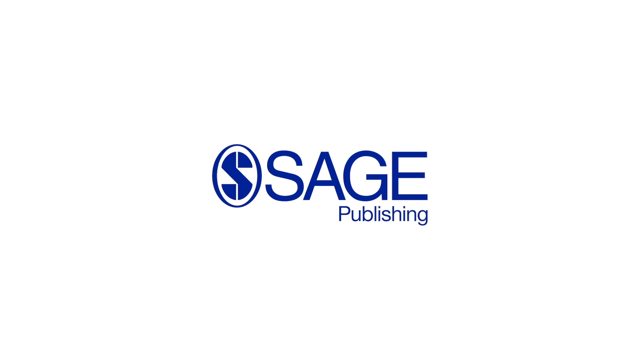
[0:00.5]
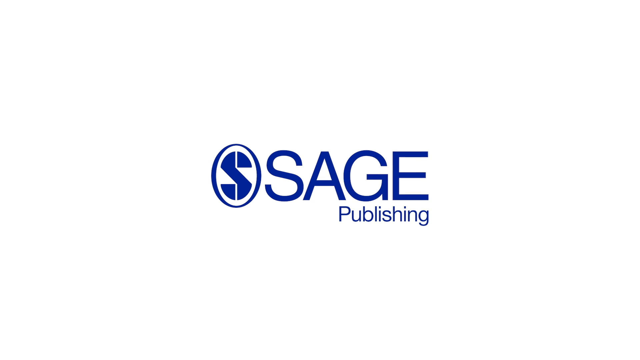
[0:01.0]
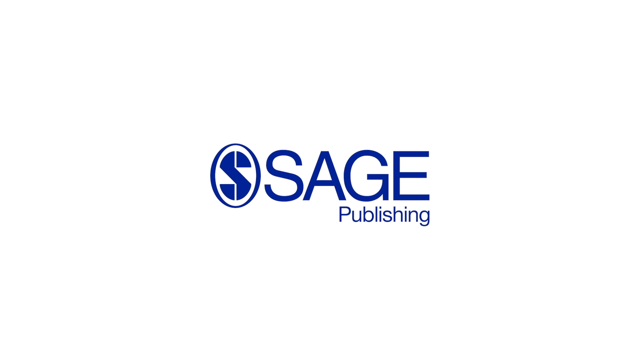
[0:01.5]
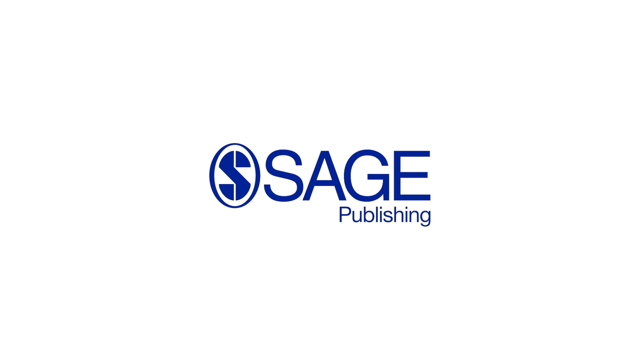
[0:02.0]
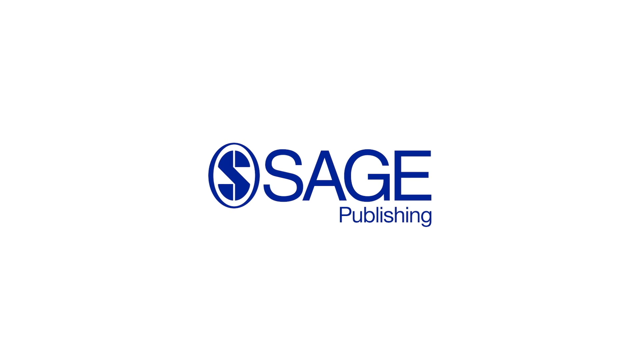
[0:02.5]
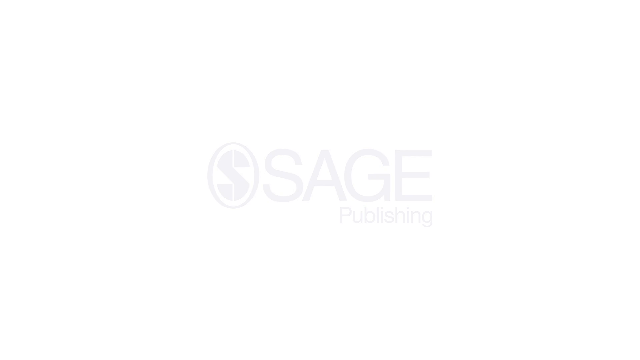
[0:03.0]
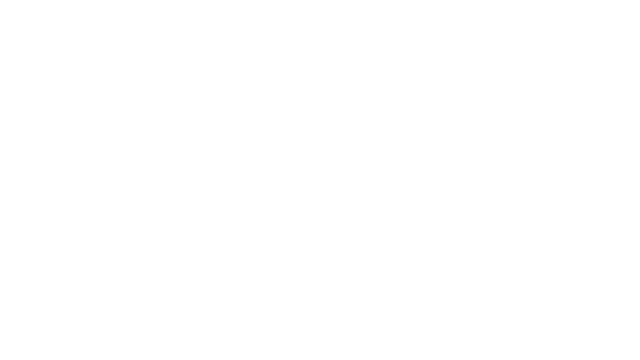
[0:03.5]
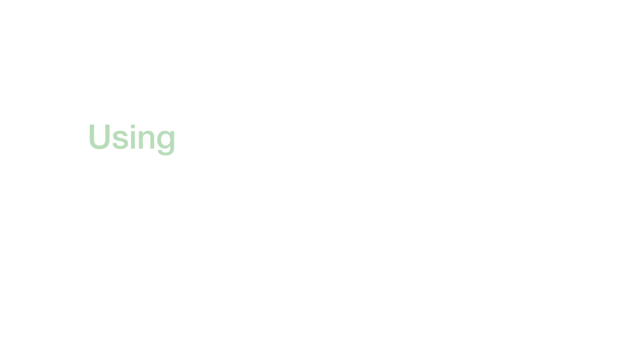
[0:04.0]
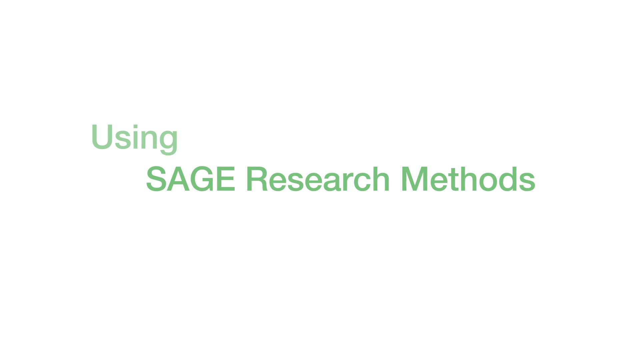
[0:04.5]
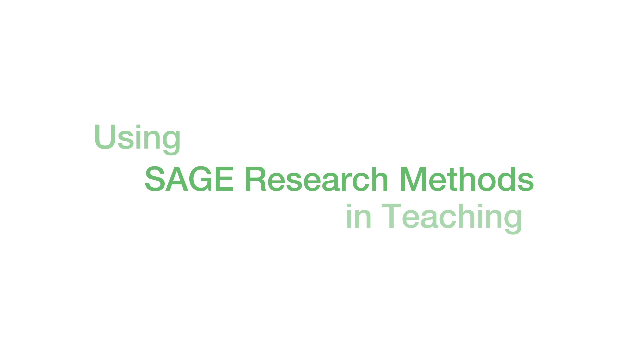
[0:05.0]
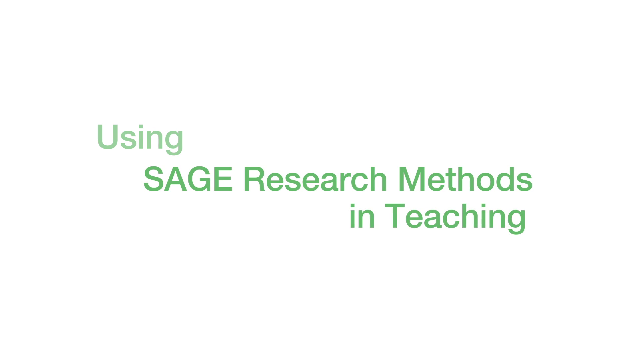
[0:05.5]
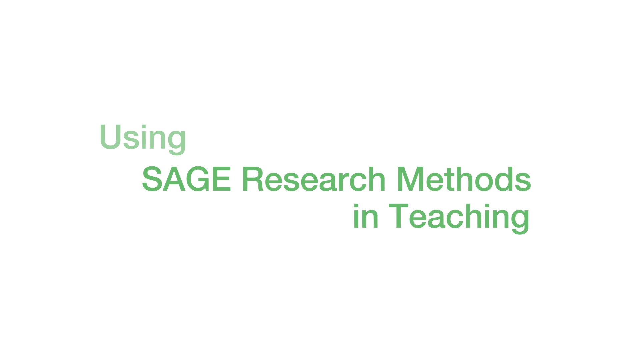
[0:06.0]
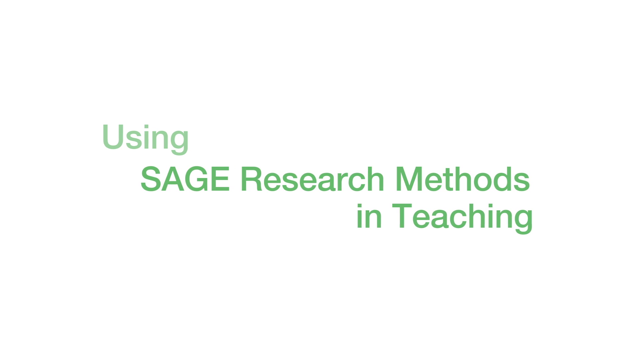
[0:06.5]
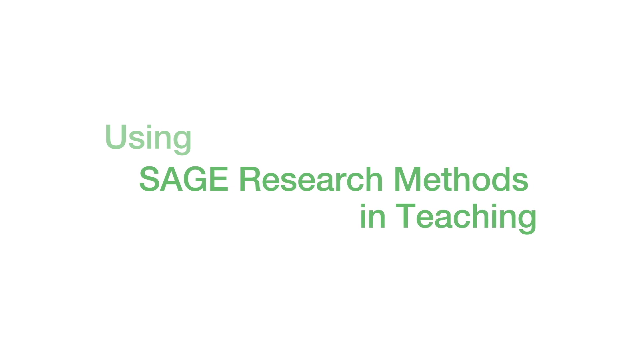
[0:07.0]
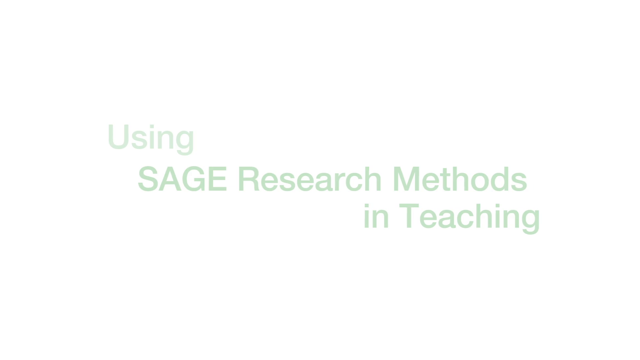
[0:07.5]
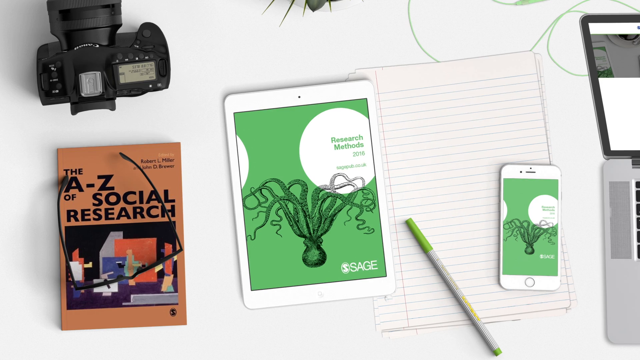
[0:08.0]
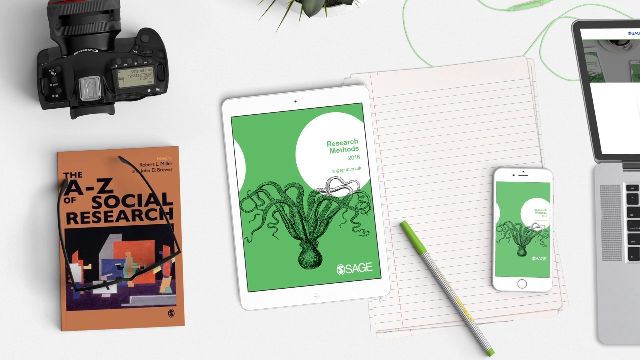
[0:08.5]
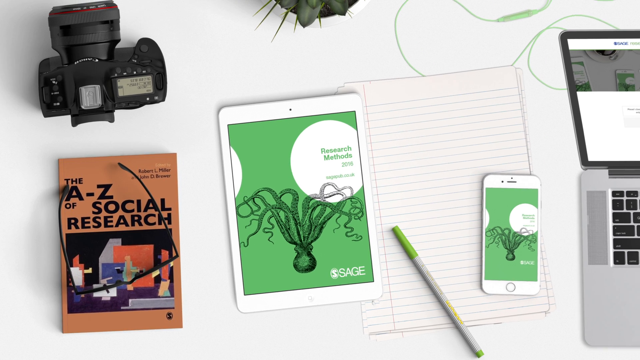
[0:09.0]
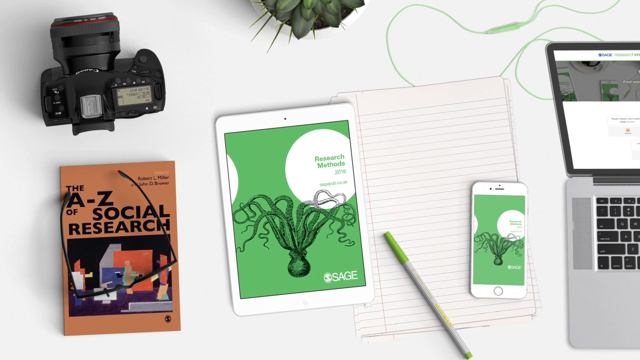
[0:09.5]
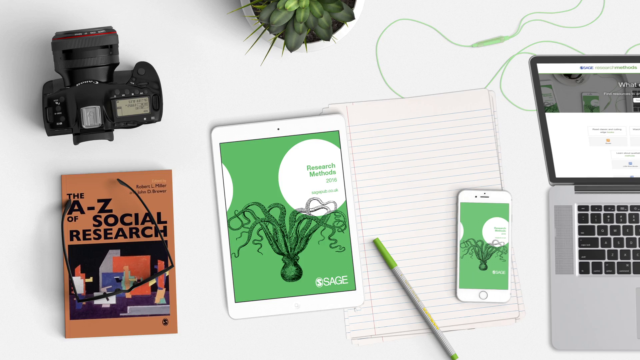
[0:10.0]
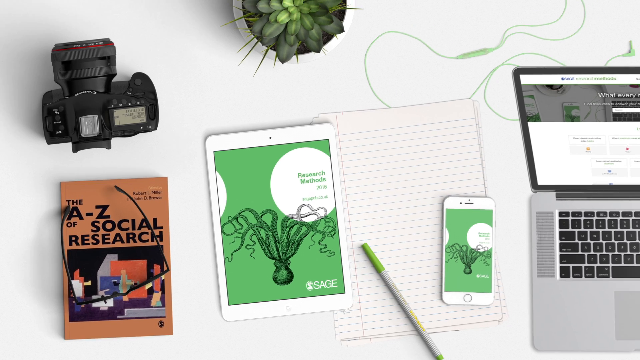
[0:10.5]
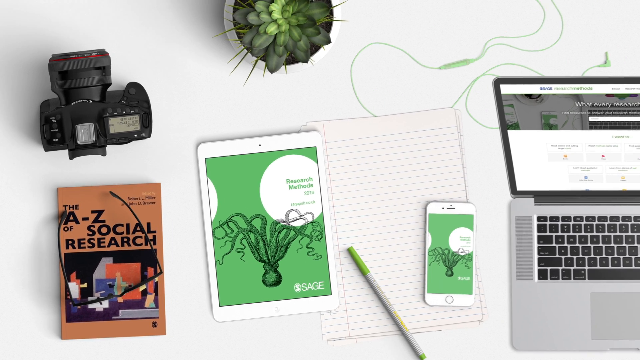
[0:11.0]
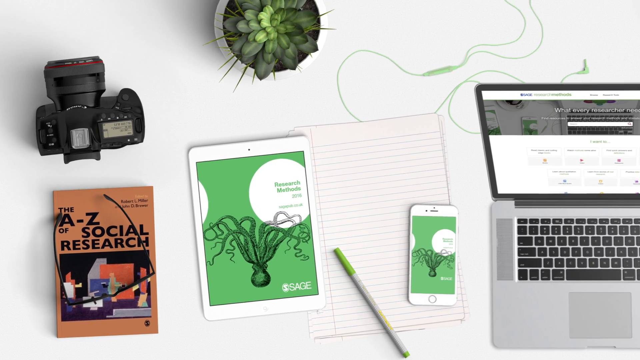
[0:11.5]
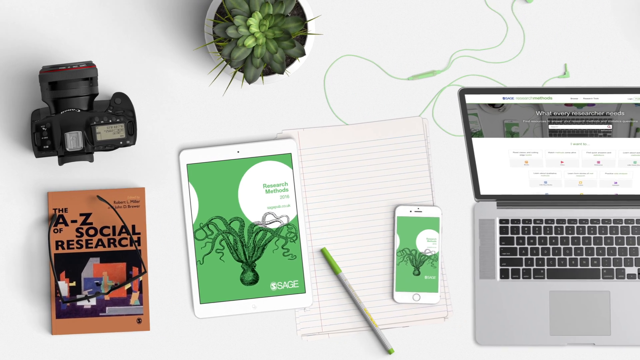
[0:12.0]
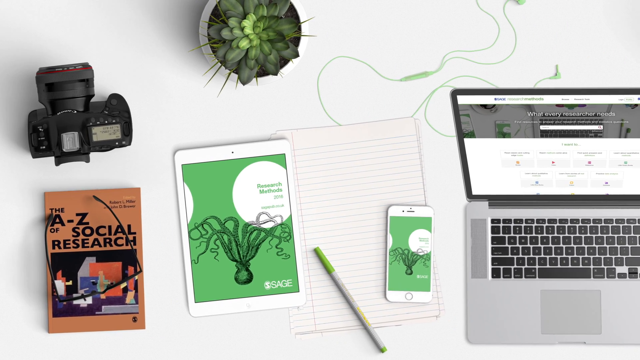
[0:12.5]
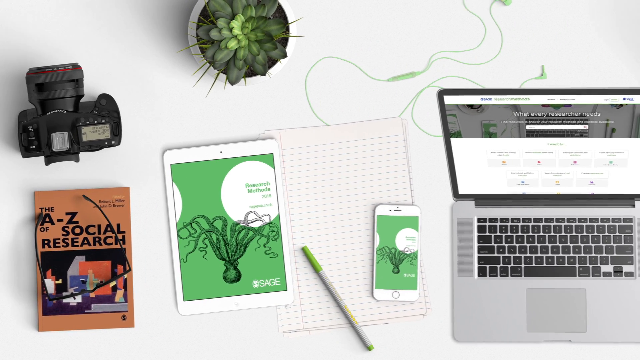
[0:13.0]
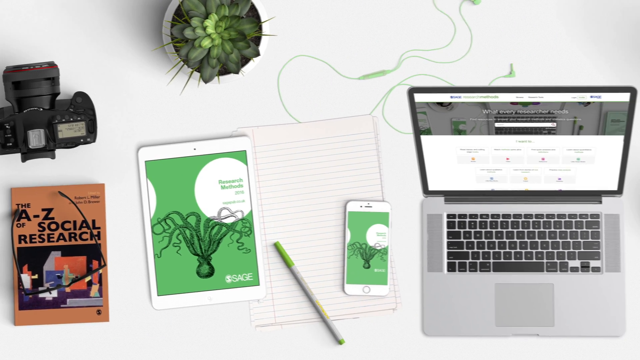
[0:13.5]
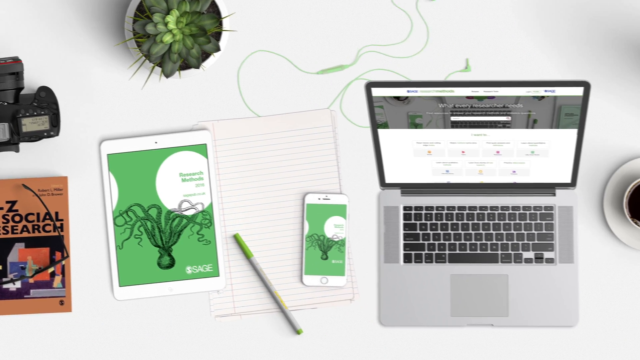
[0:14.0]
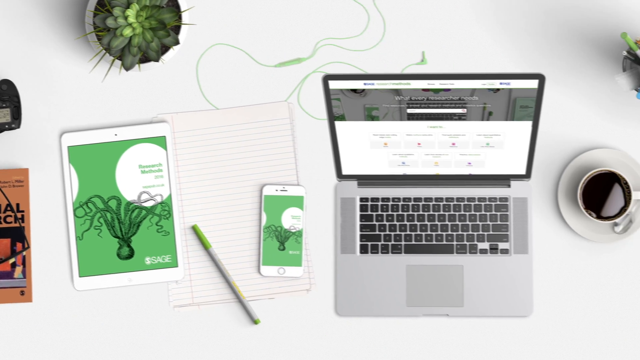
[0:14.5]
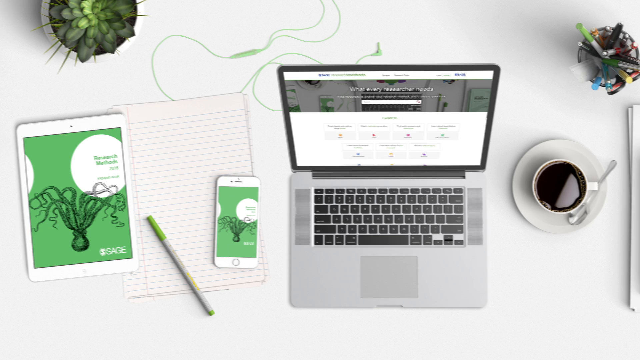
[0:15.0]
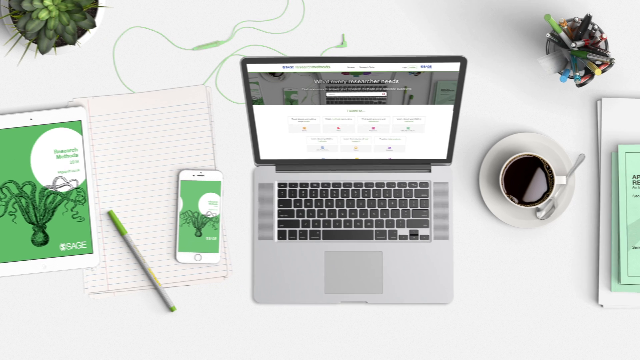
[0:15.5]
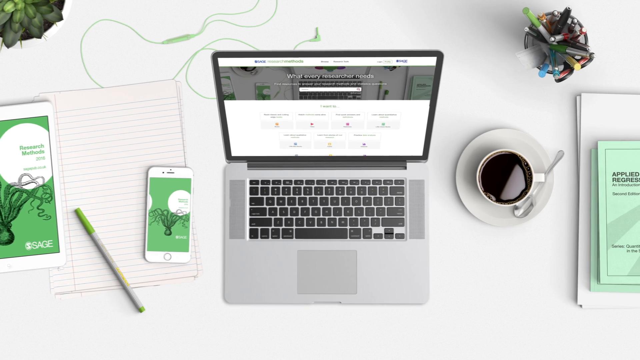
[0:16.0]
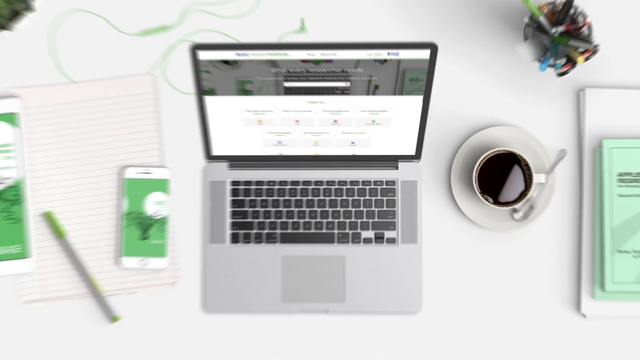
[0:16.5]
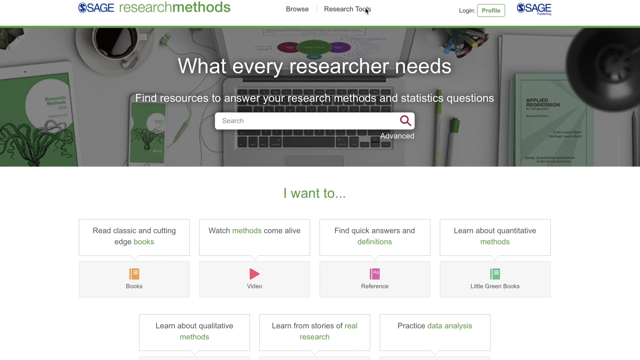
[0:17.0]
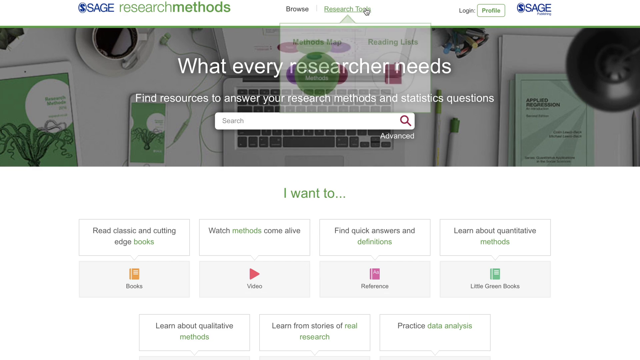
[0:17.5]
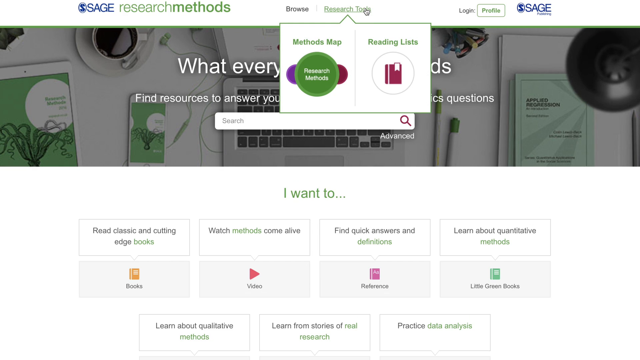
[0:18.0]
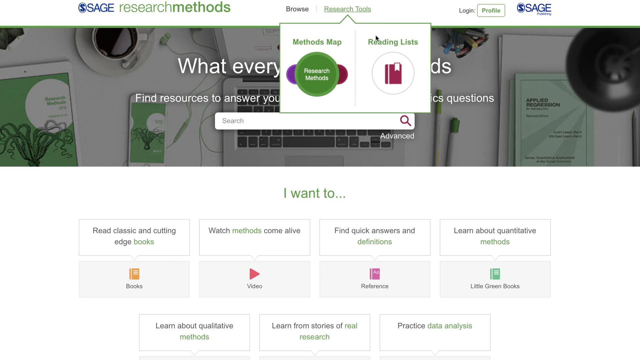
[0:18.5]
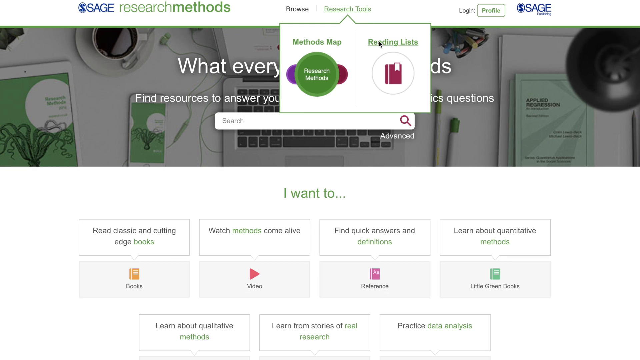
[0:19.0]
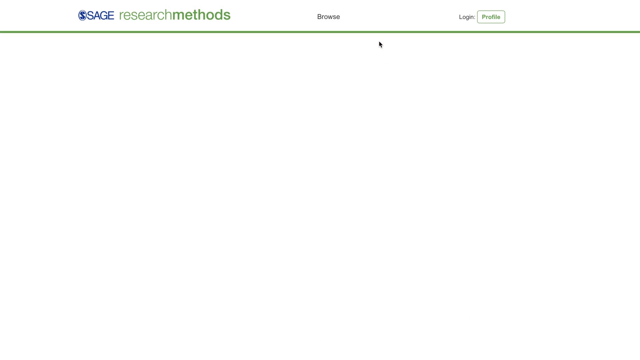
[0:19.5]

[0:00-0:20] A Sage Publishing logo appears, along with the subject of using the Sage research method in teaching. A camera, a laptop, pens and books are on a table.